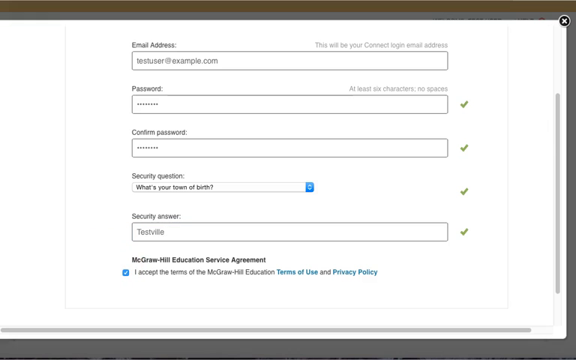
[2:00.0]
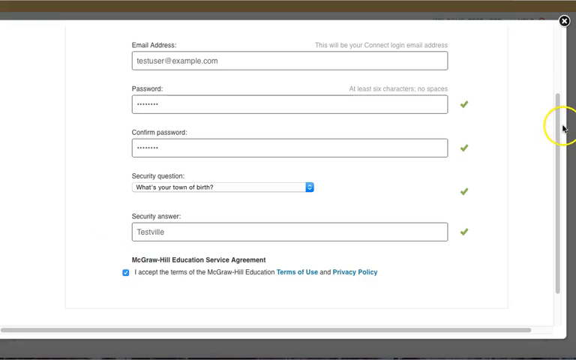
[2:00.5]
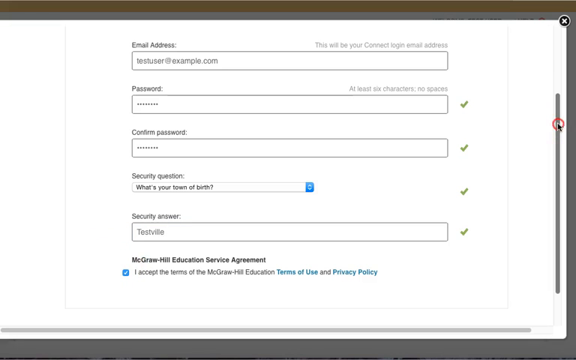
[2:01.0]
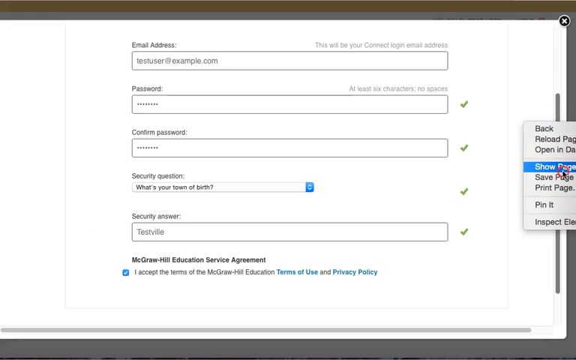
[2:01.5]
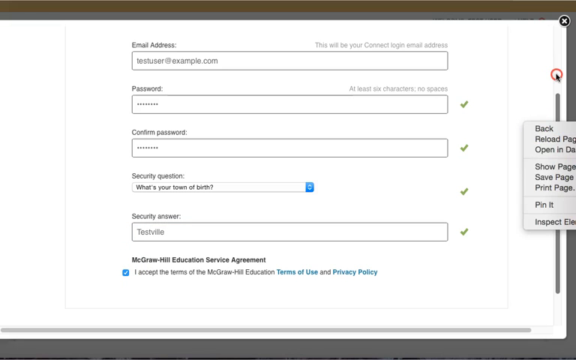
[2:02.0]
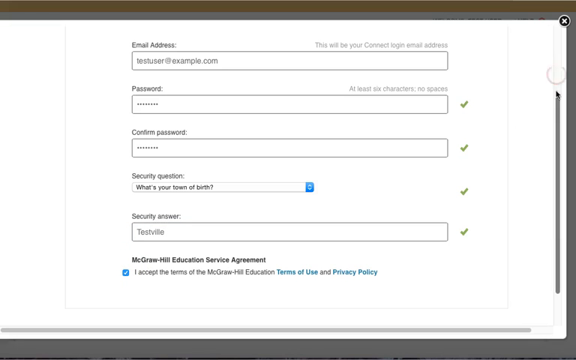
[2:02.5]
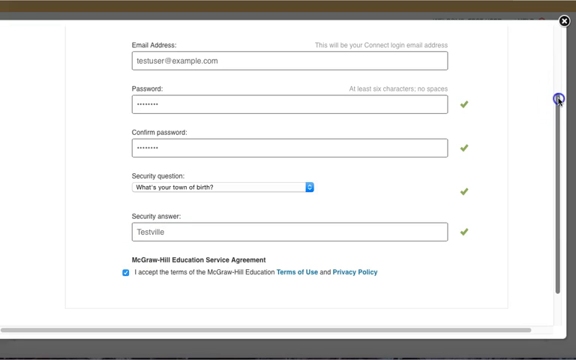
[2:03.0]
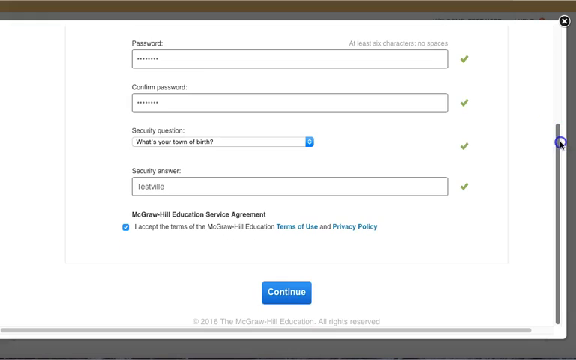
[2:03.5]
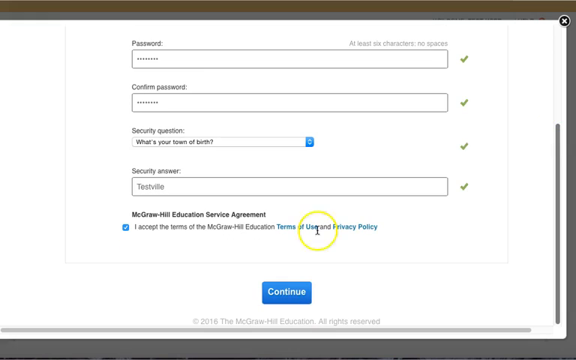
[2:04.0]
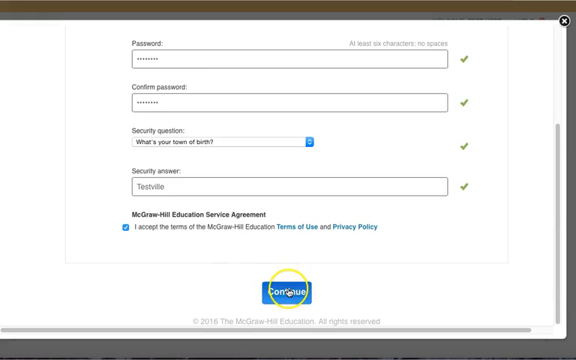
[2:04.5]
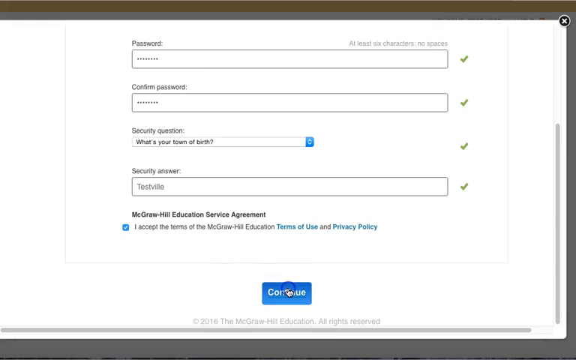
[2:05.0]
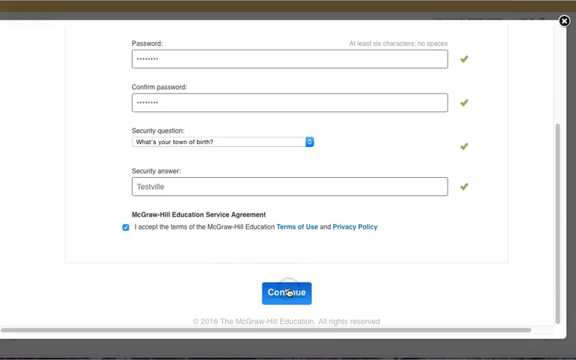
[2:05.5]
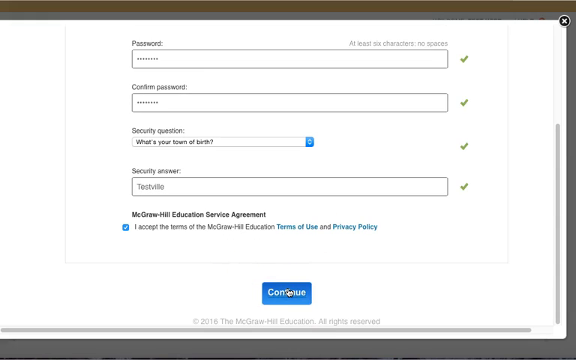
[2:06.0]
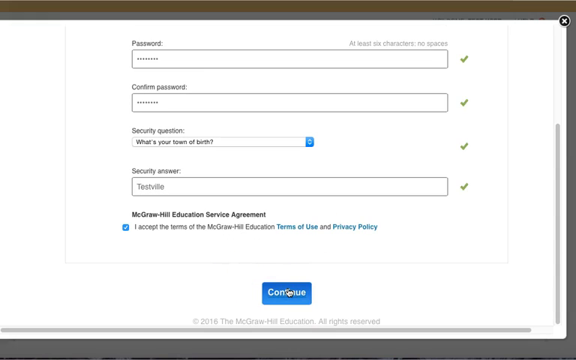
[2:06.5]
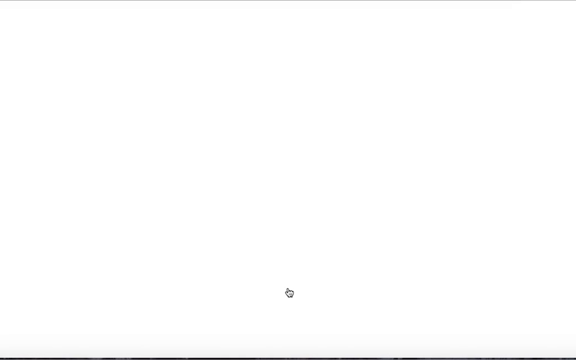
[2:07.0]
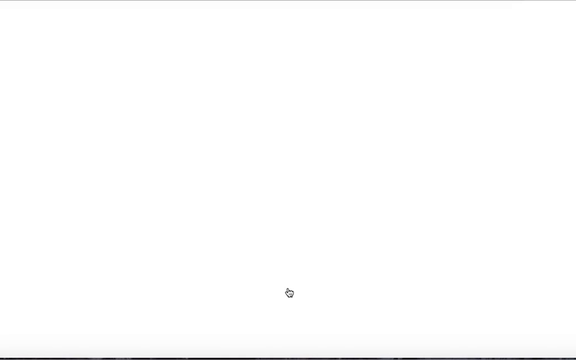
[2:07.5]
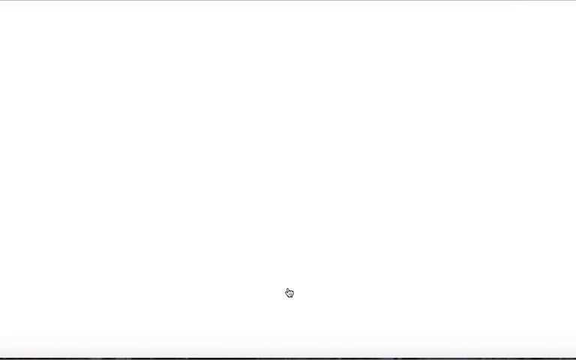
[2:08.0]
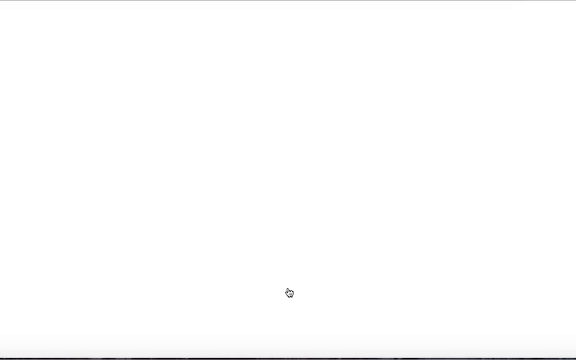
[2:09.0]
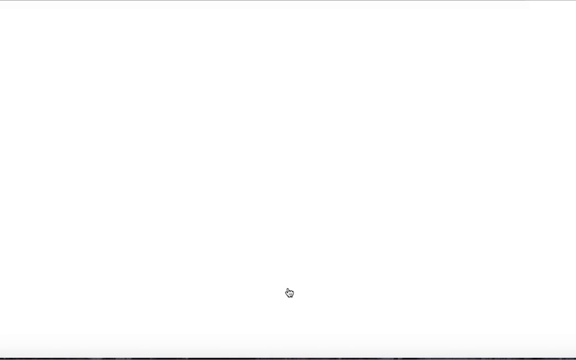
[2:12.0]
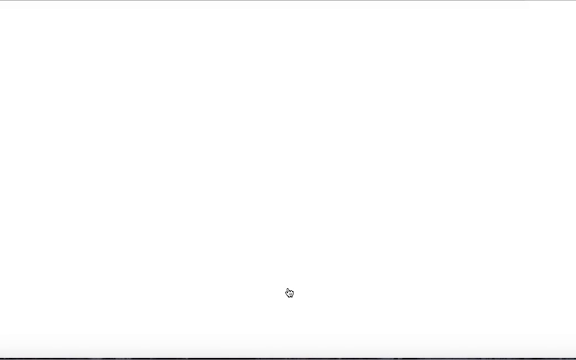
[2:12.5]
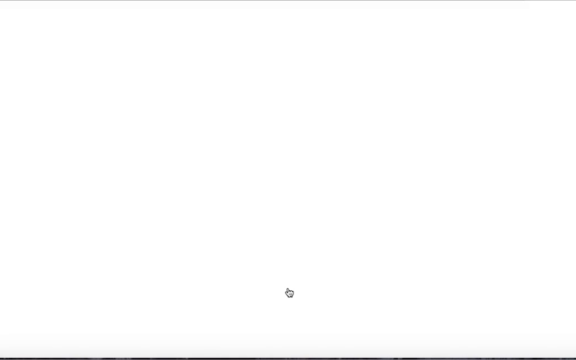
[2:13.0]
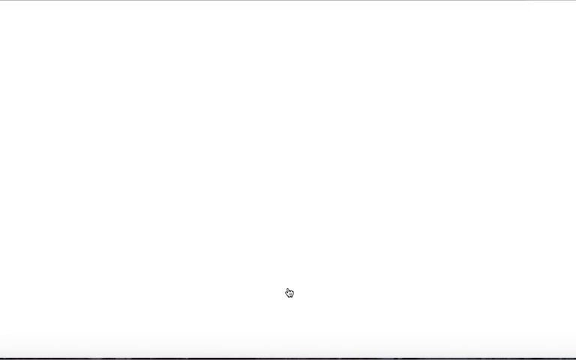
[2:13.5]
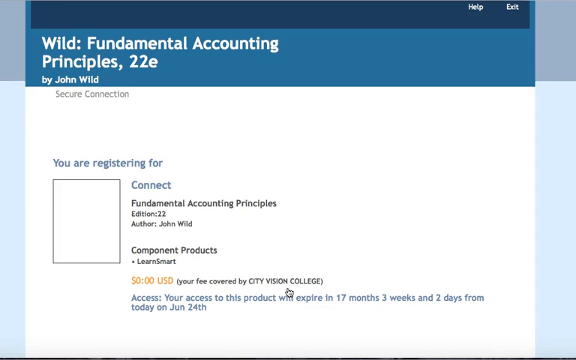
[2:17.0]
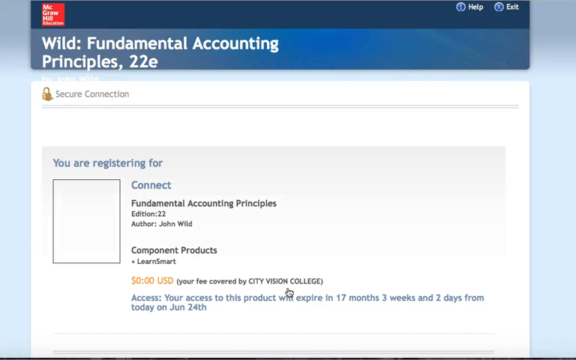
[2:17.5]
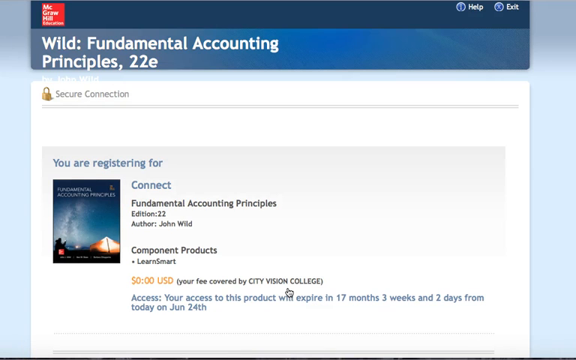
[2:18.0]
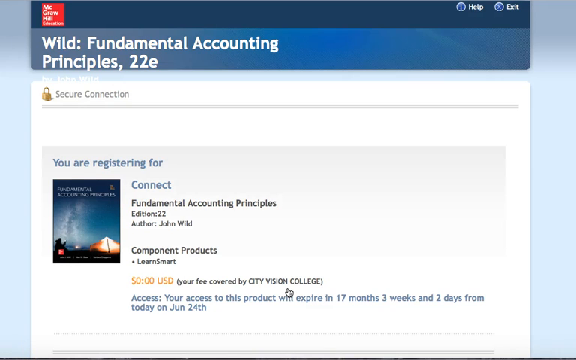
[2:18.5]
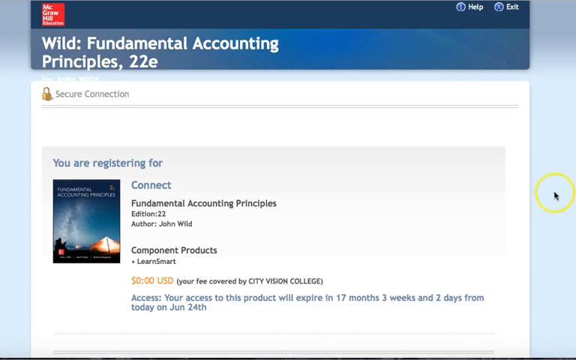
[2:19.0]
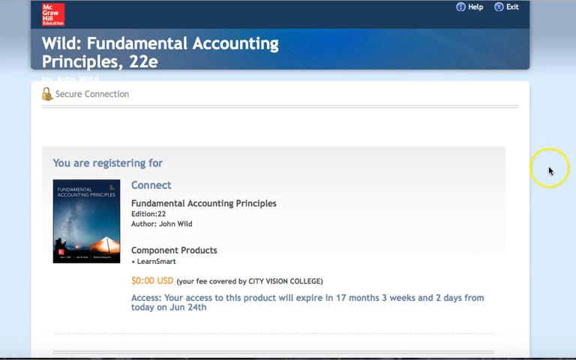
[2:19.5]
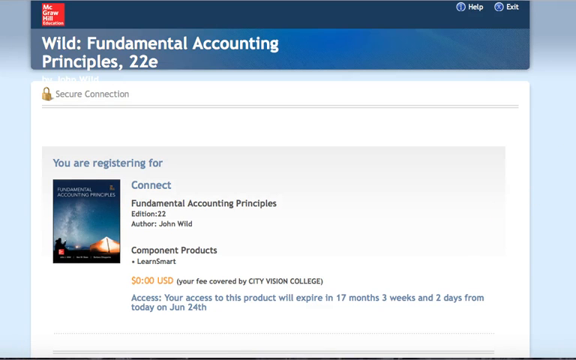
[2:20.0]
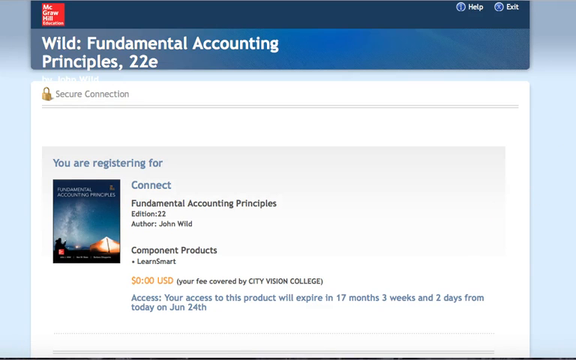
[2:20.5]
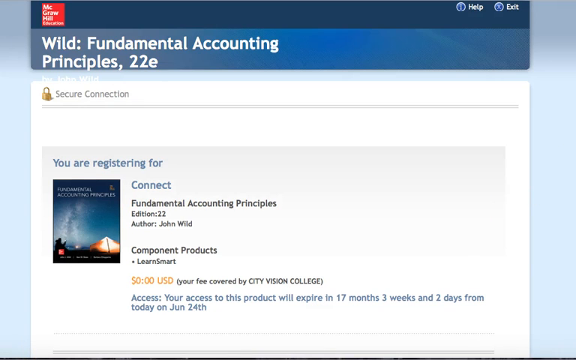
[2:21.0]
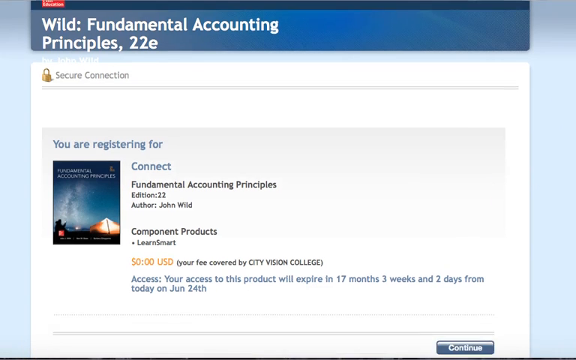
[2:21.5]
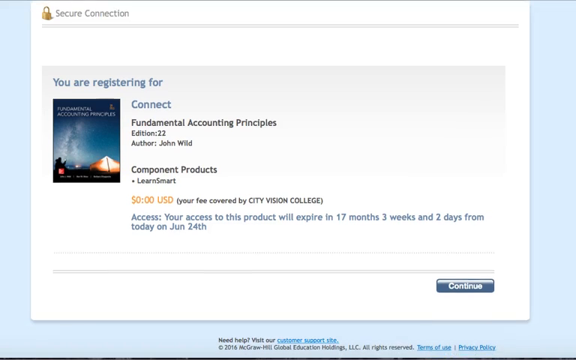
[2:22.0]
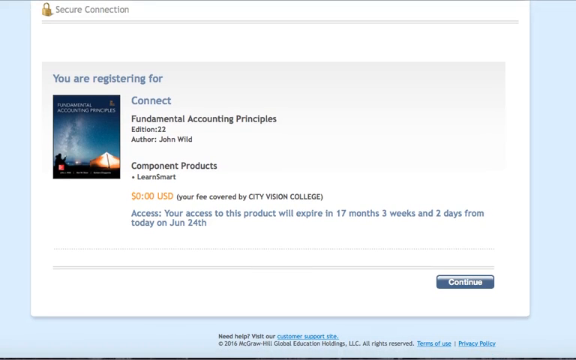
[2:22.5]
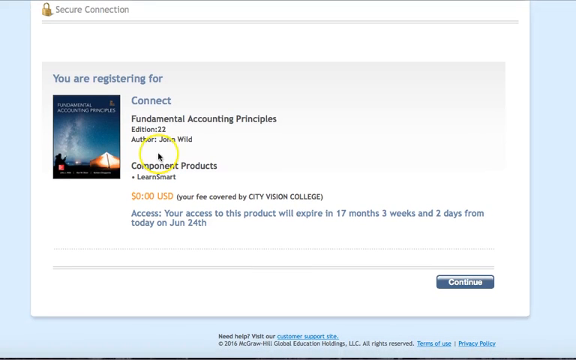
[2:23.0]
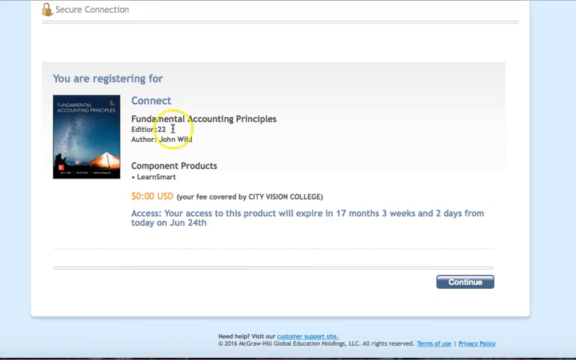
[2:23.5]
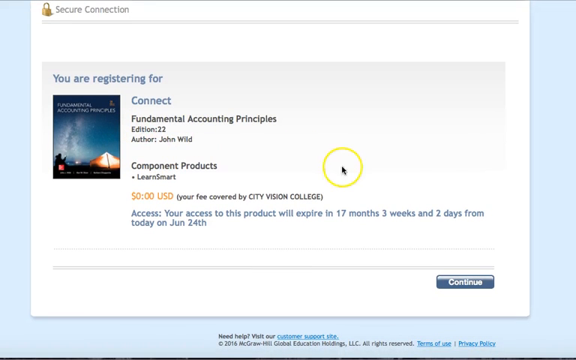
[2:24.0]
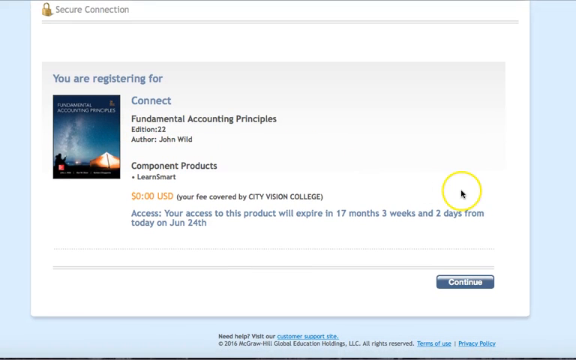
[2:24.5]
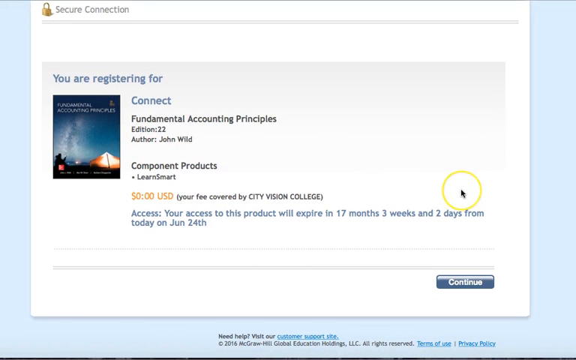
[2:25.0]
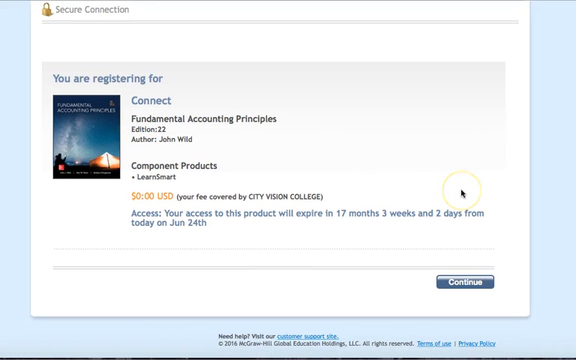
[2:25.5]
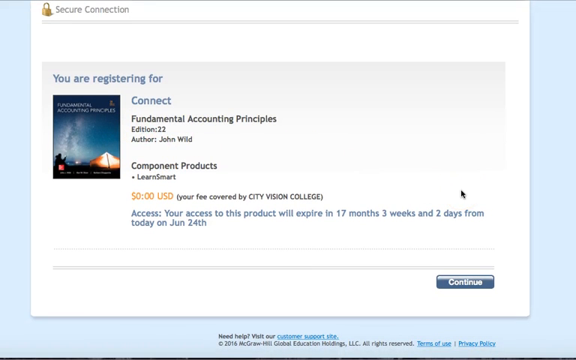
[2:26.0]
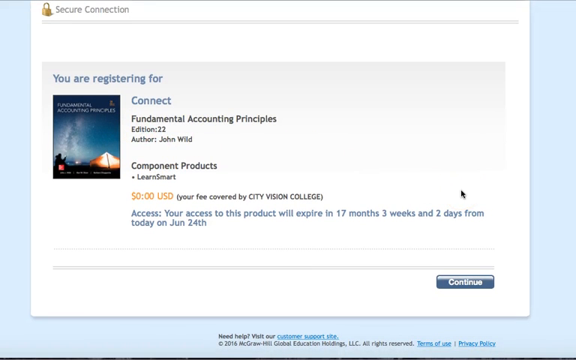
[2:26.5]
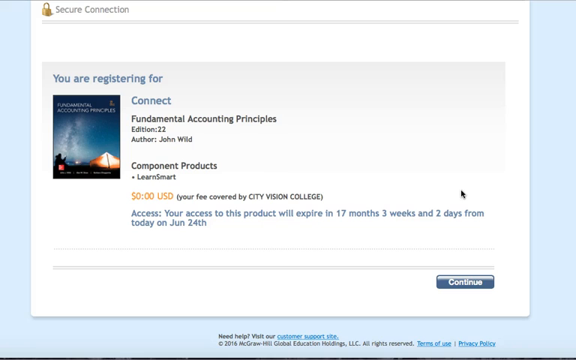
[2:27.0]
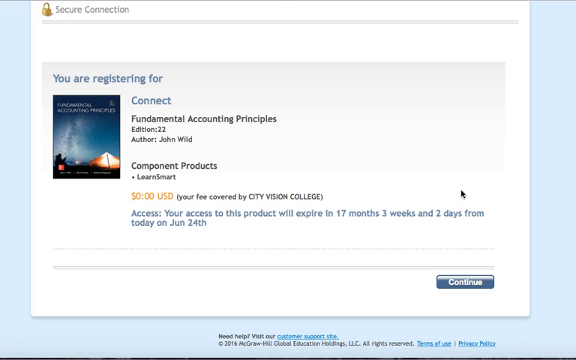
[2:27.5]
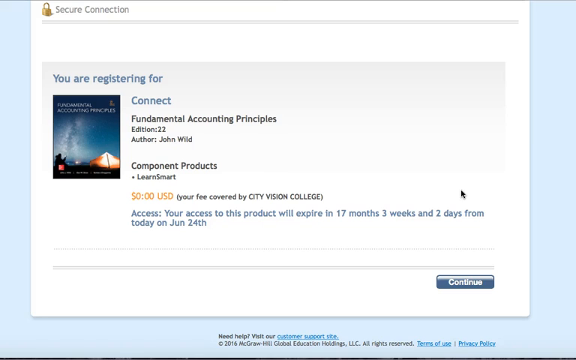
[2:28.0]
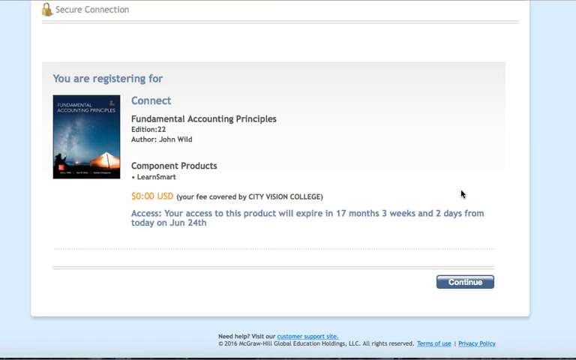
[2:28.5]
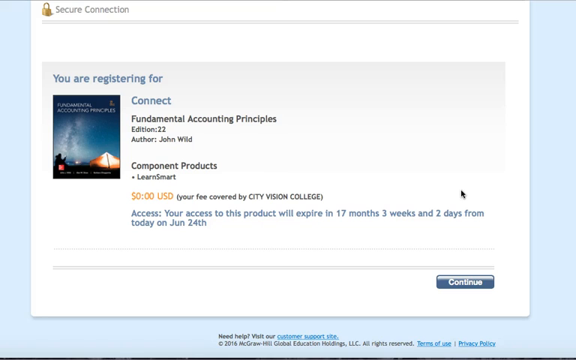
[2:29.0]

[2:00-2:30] The registration page with the email, password, and security question is still shown. The person checks the information once more, scrolling up and down, and finally clicks continue. A white screen stays up for several seconds. Eventually the digital library returns, saying "you're registering for connect" and showing "fundamental accounting principles", edition number 22, authored by John Wilde. A listing about the product follows, with something about zero dollars, apparently the price of the textbook. Access information says there are 17 months, three weeks, and two days from today, June 24th, to access the material. He scrolls down a little to show everything more clearly, doesn't click on anything, and just hovers the mouse over things before the shot cuts off.